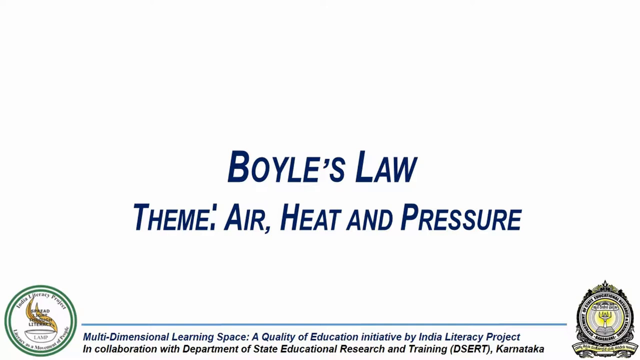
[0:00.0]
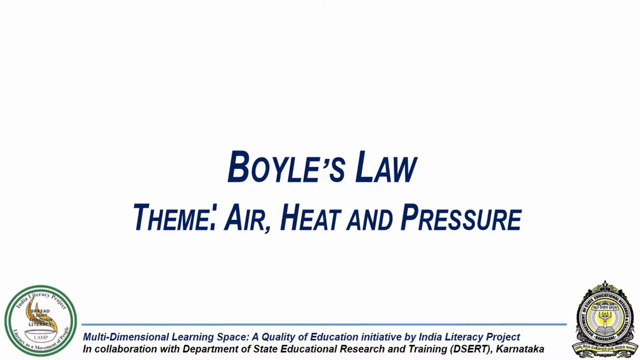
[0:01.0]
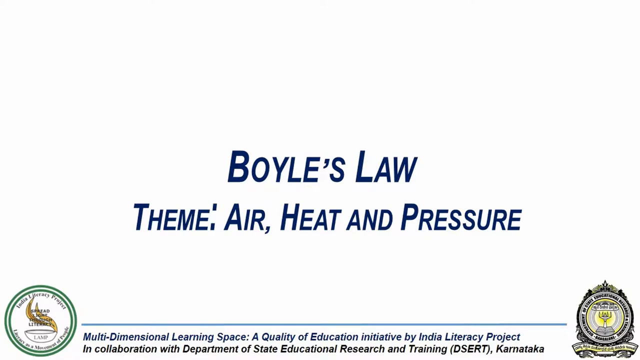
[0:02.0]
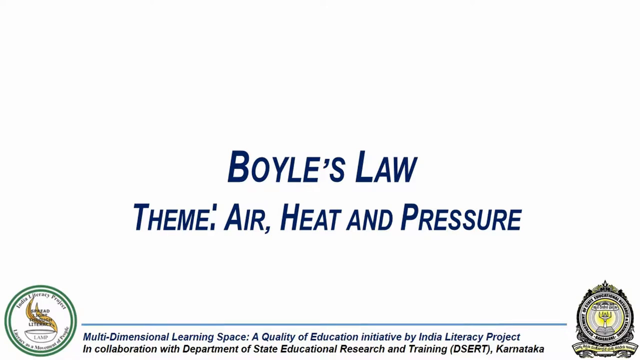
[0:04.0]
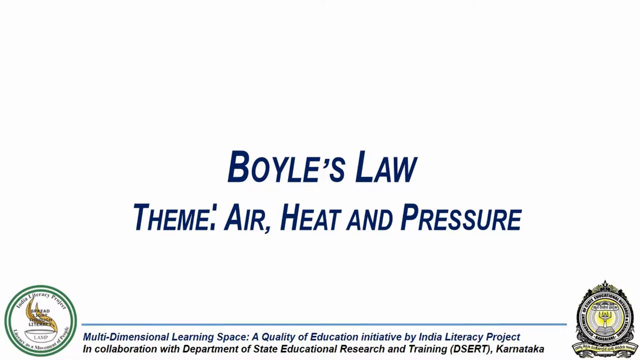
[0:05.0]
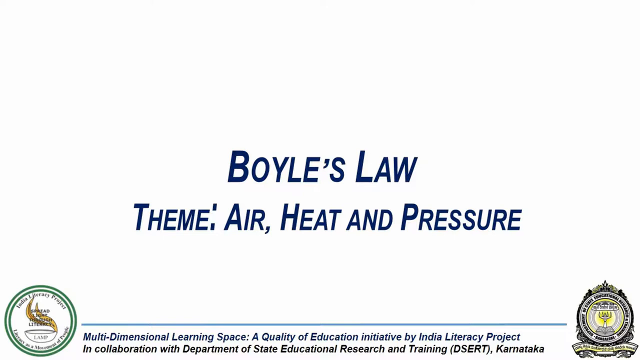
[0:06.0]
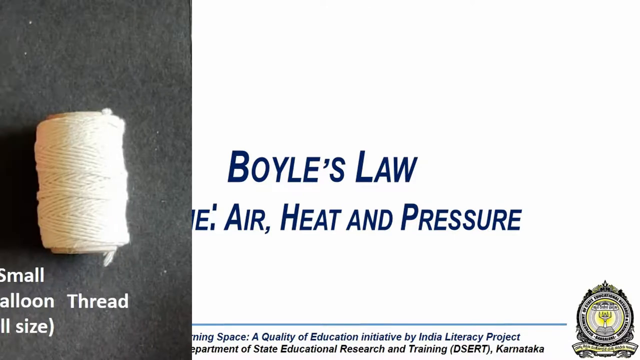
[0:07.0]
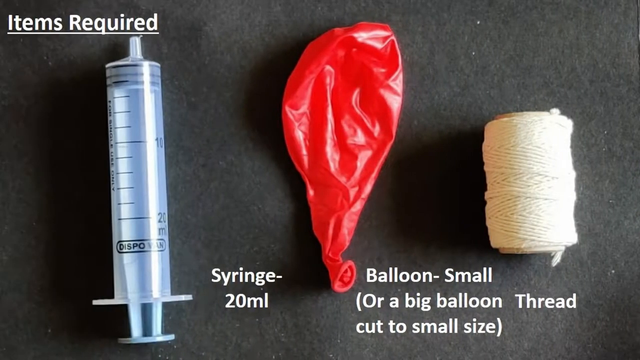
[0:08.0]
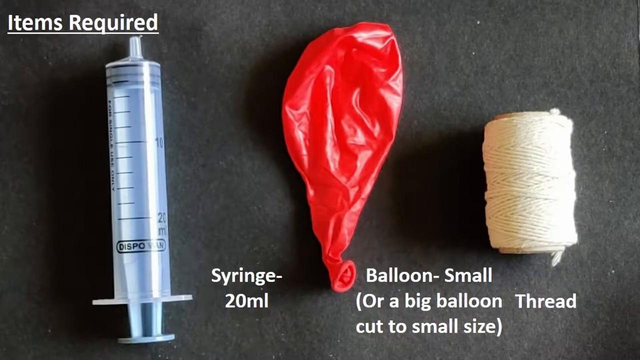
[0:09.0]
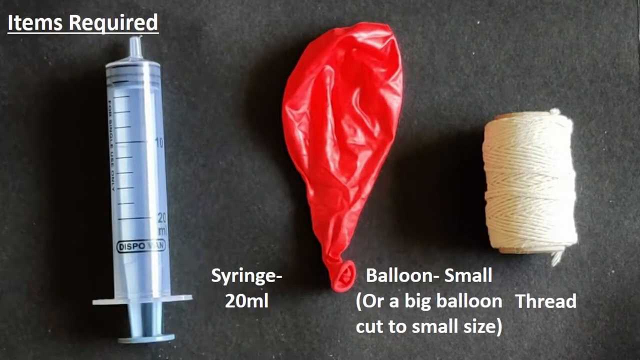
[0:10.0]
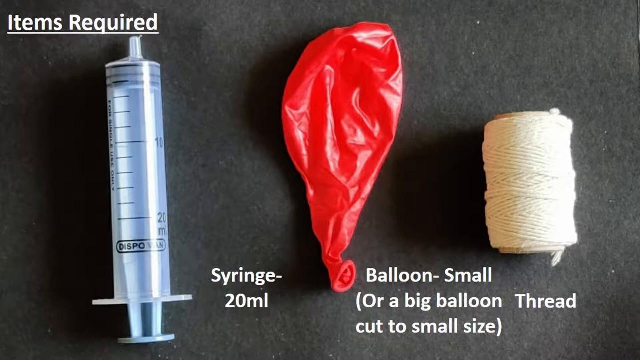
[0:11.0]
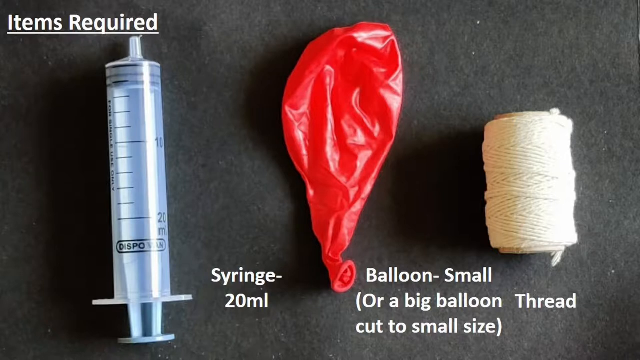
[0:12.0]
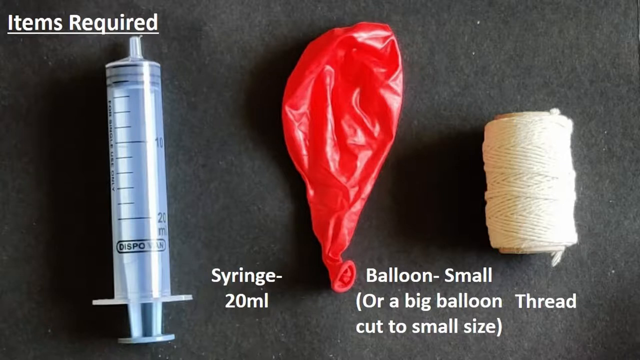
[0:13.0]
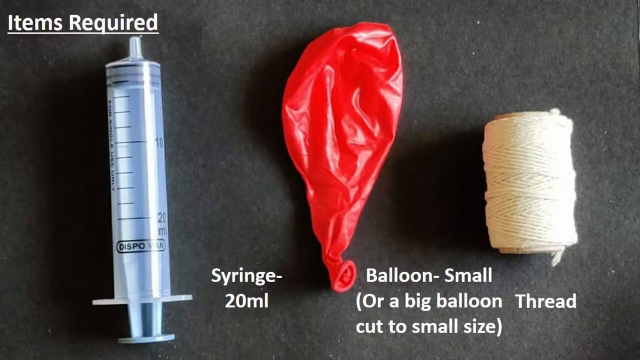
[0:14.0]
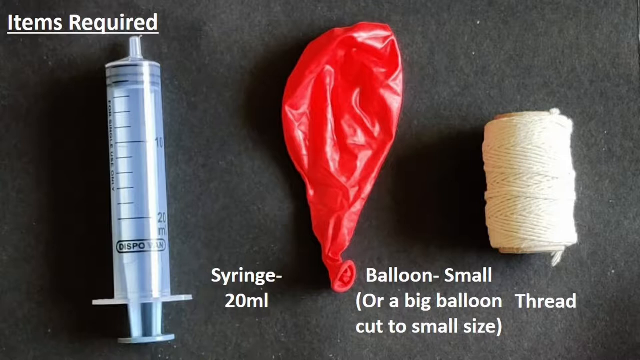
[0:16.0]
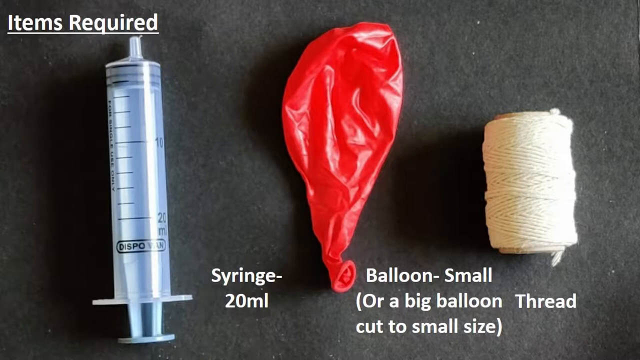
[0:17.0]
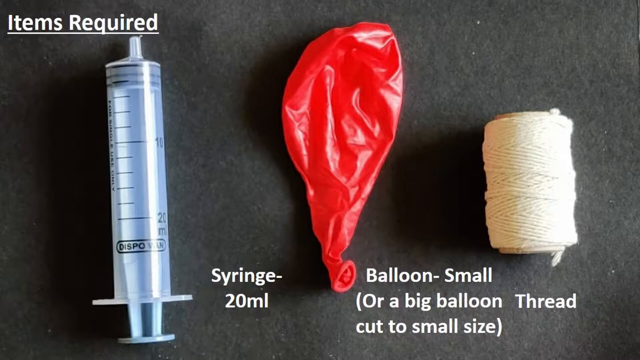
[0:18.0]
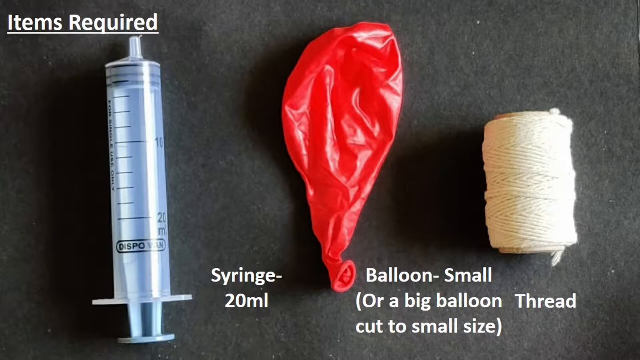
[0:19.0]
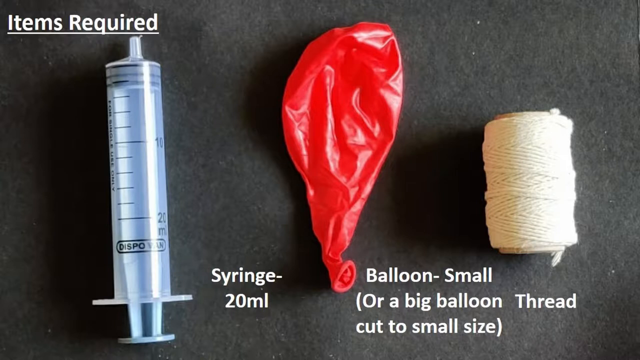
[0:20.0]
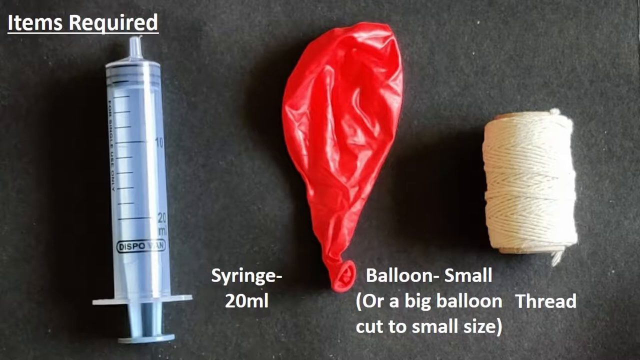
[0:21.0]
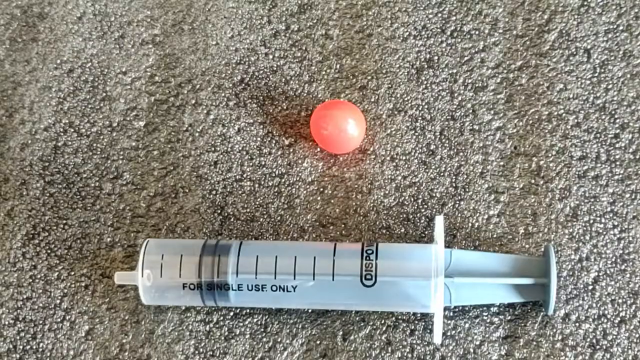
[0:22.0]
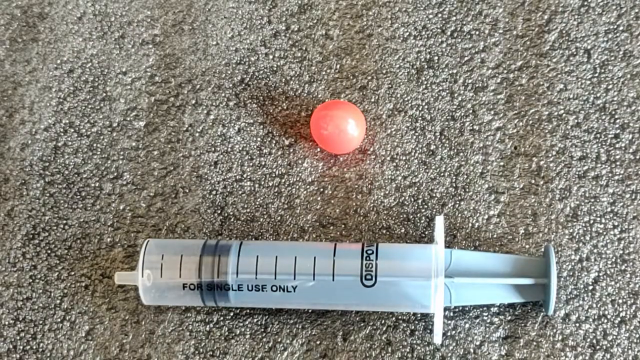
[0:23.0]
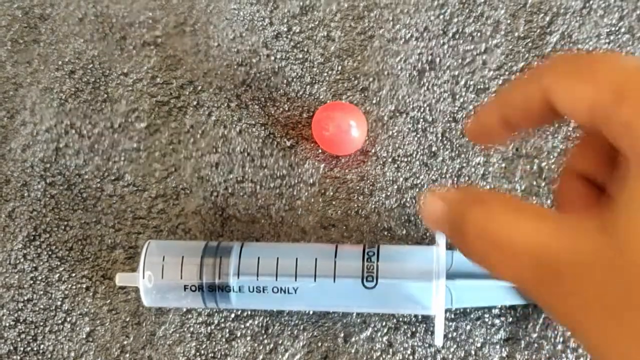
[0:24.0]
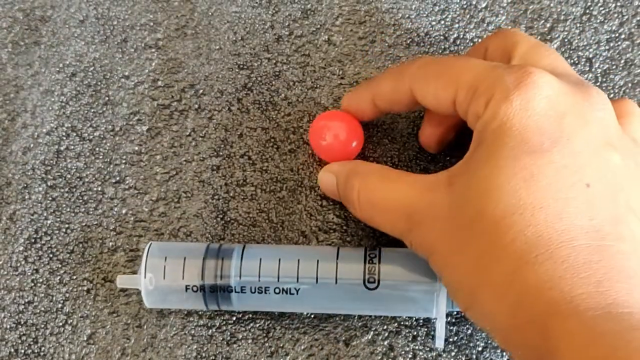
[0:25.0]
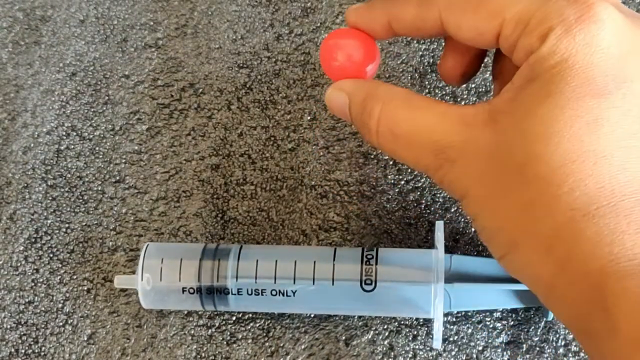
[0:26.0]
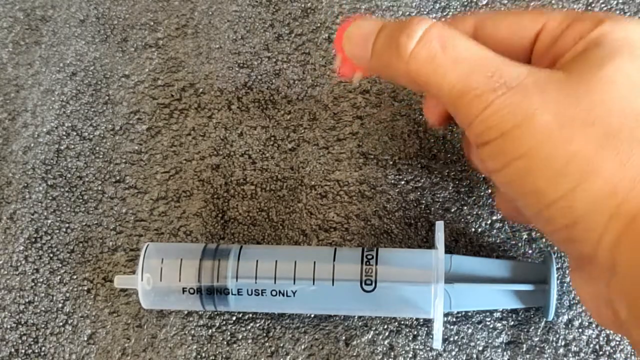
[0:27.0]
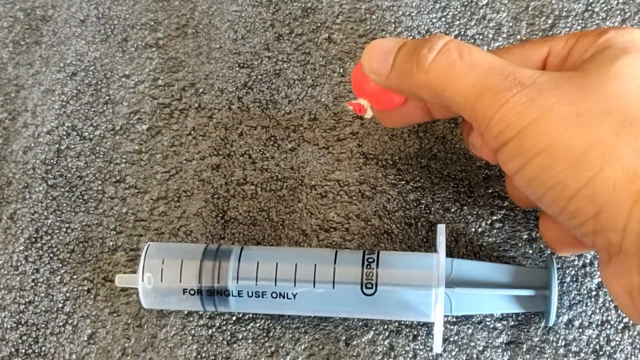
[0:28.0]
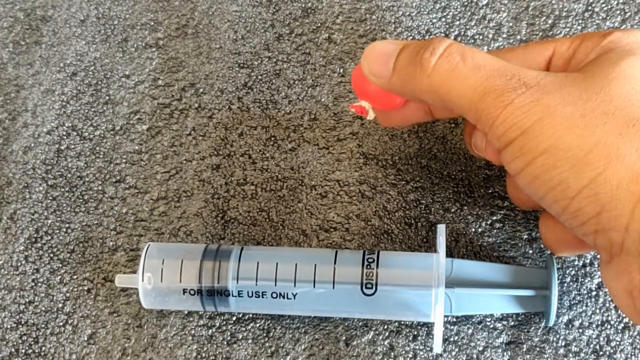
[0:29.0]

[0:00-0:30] The video begins by showing the items needed: a clear syringe that looks like a five-milliliter syringe, a red balloon, and a white thread. It then shows the clear syringe with the red balloon inflated a little and tied with the white thread. A person, a woman or a man, inserts the inflated red balloon inside the syringe and, with the syringe's nozzle closed off, pushes the balloon toward the top of the syringe. At some point the push stops; the balloon goes back down and stops in the middle of the syringe. The video then explains why this happened: Boyle's law.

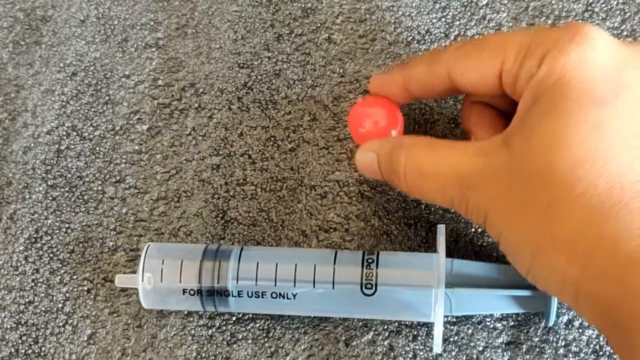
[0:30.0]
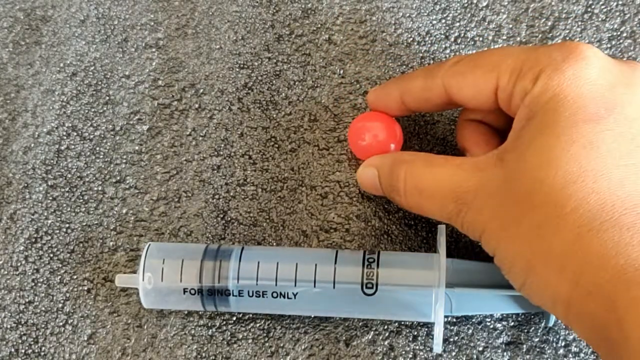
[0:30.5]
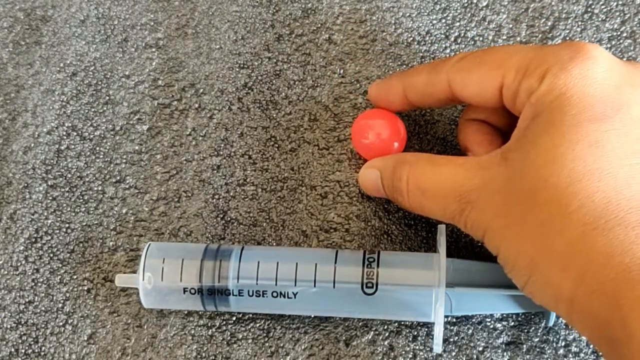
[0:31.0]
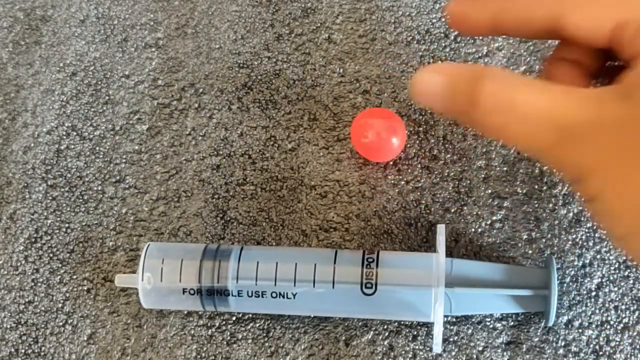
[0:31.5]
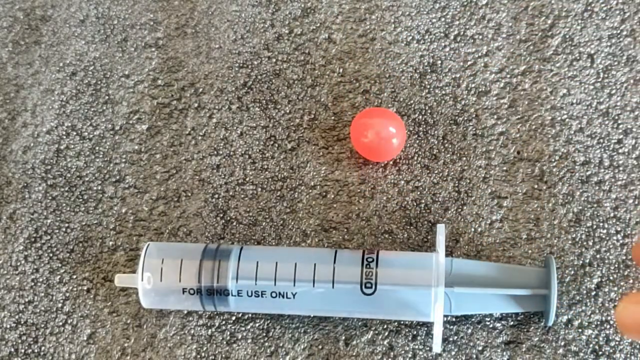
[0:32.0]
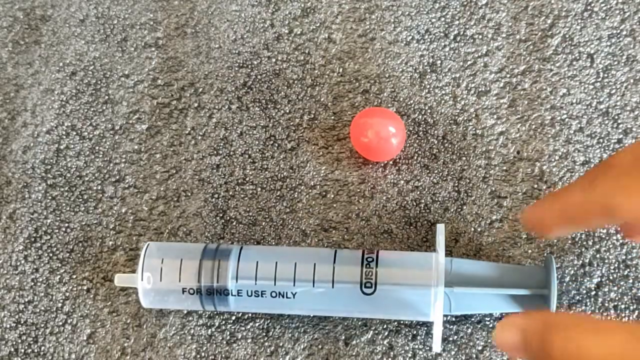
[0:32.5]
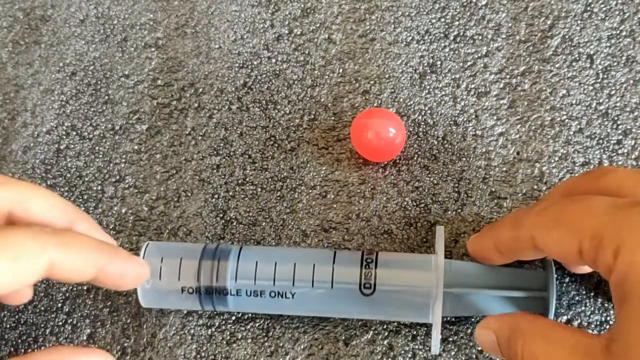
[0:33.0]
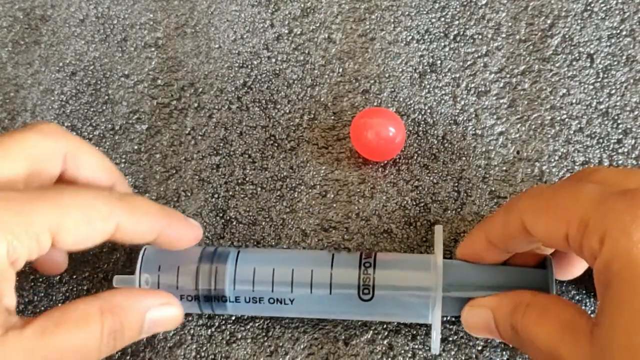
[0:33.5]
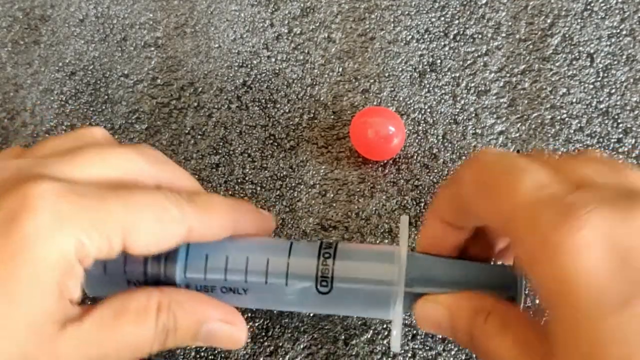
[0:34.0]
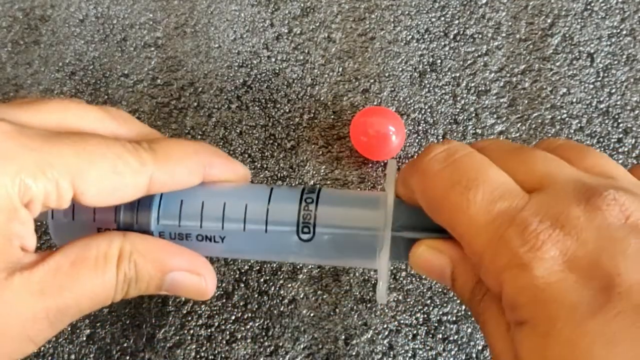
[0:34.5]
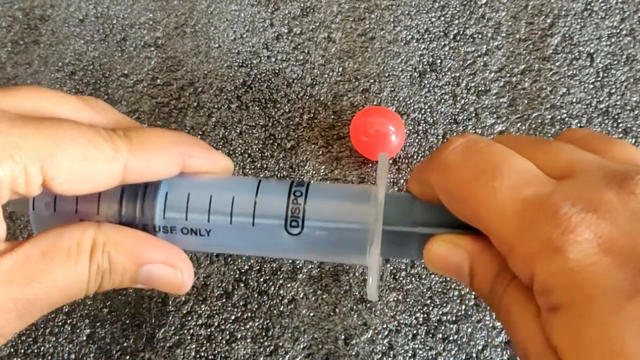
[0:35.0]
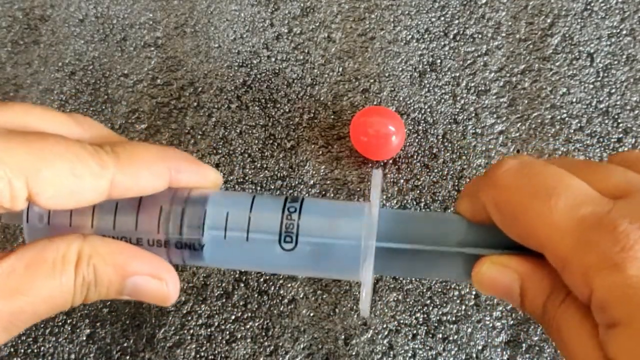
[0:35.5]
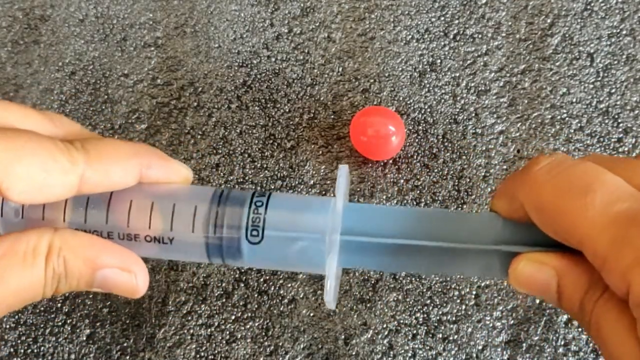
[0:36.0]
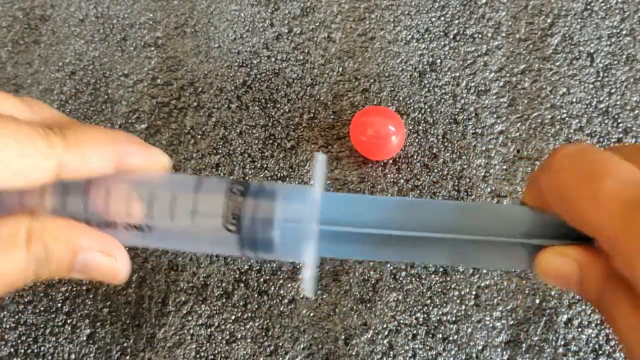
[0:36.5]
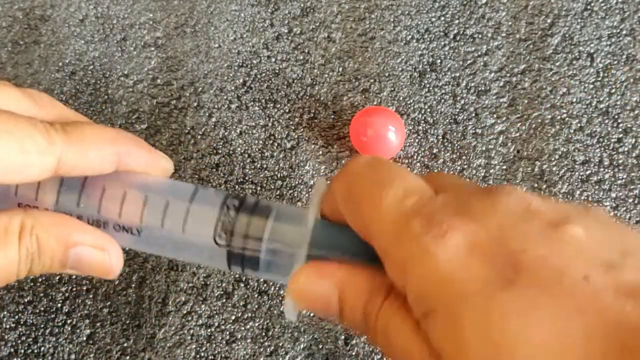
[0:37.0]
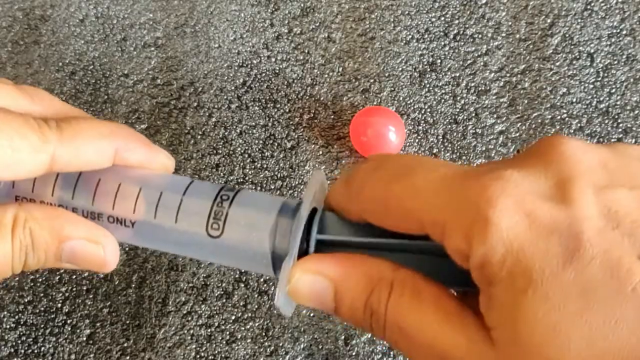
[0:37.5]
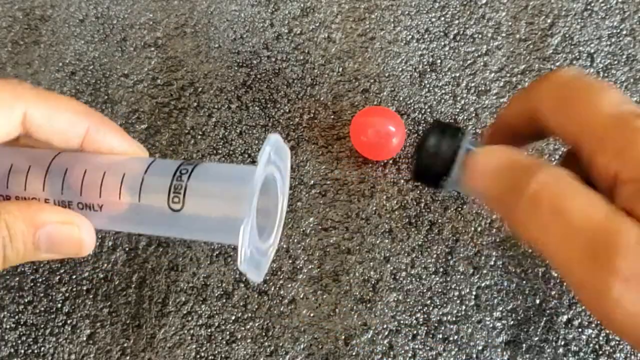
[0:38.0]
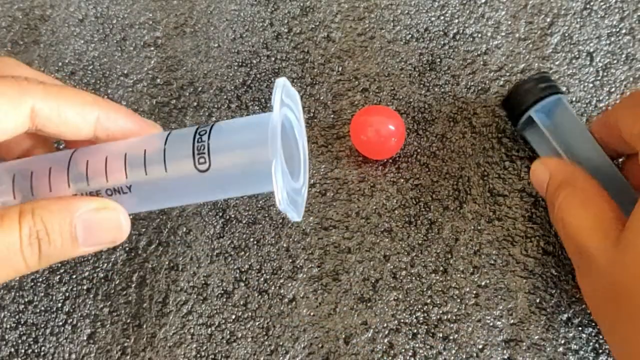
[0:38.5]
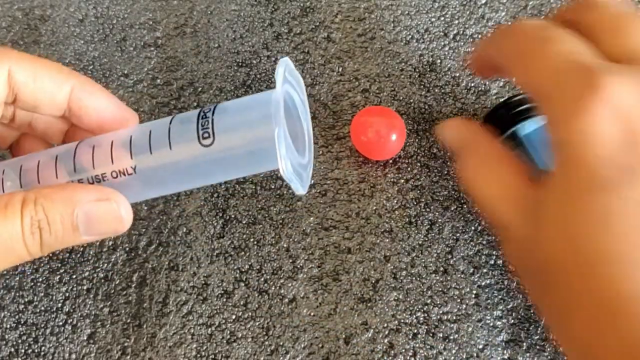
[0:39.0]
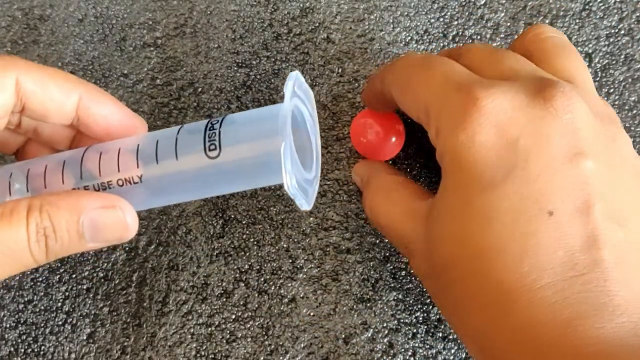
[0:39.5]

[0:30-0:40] The video shows the items needed: a clear 20 ml syringe, a red balloon, and a white thread. The person shows the syringe, takes out the back of the syringe, inserts the inflated red balloon inside, puts the back of the syringe back in, closes the nozzle, and tries to push the red balloon upward inside the syringe. At some point the person cannot push the balloon up anymore, so it goes down and settles in the middle of the syringe without the person putting any pressure on it. At the end, the concept of Boyle's law is explained.